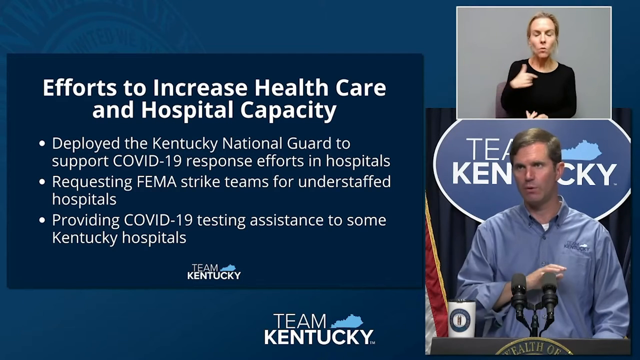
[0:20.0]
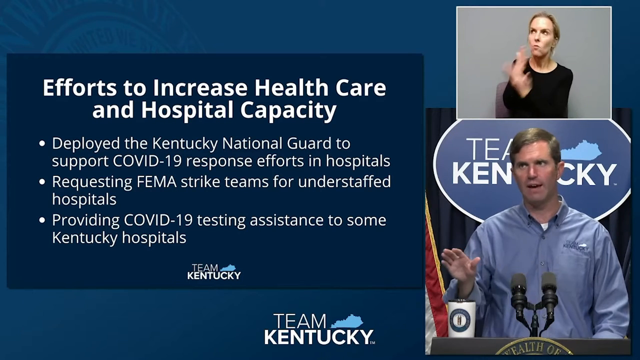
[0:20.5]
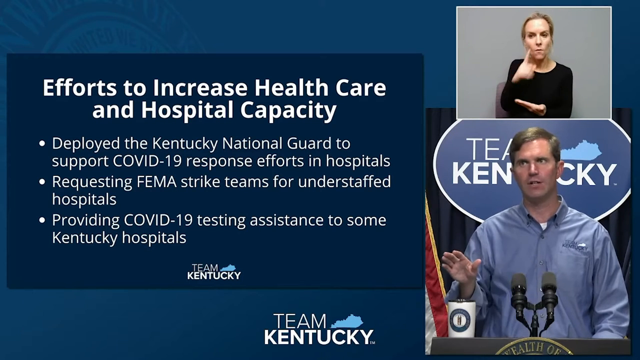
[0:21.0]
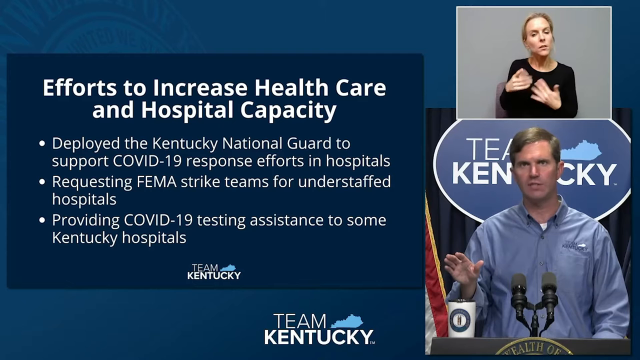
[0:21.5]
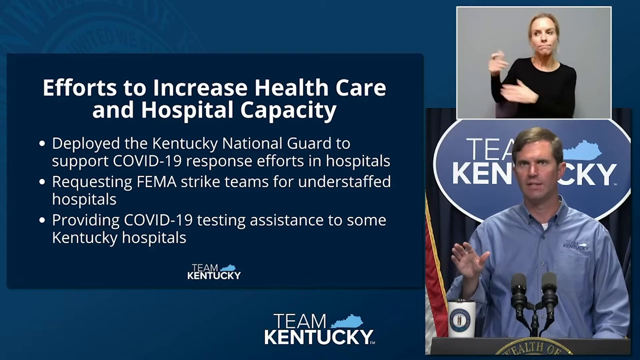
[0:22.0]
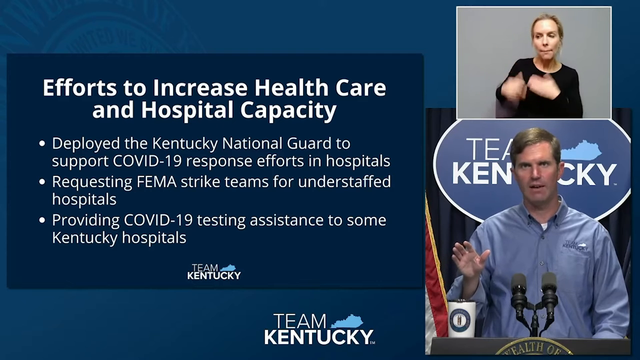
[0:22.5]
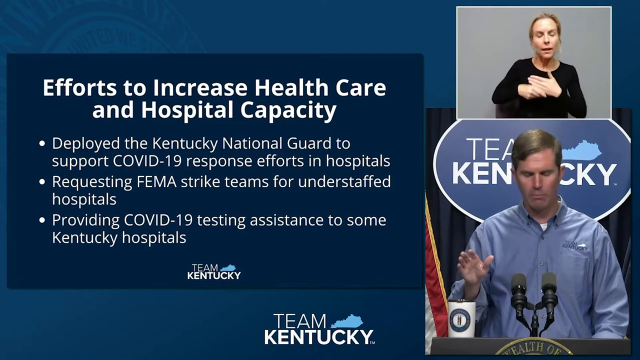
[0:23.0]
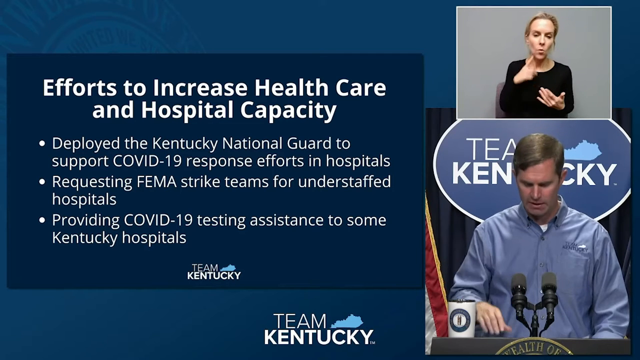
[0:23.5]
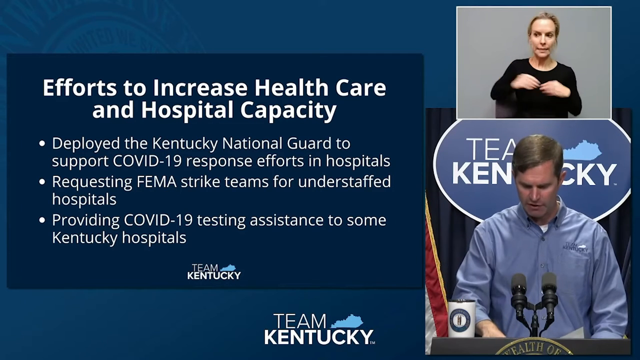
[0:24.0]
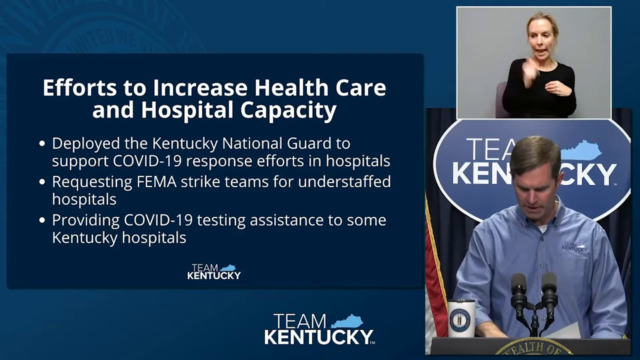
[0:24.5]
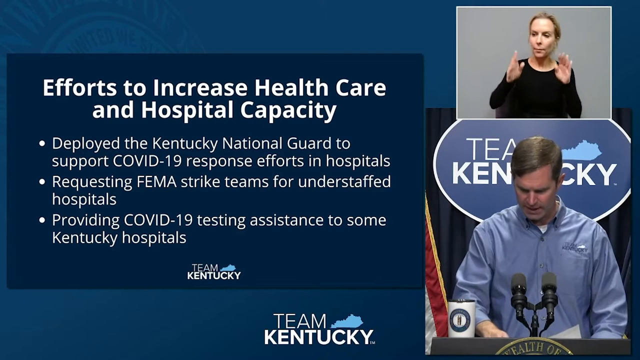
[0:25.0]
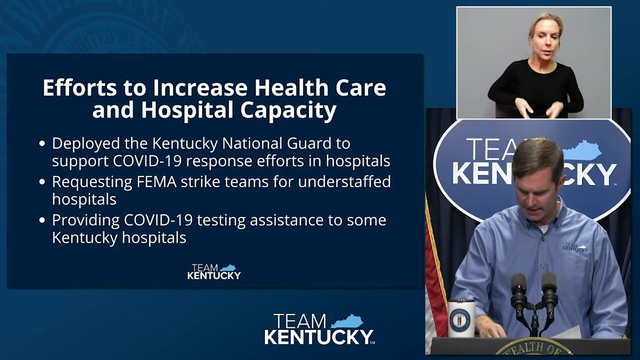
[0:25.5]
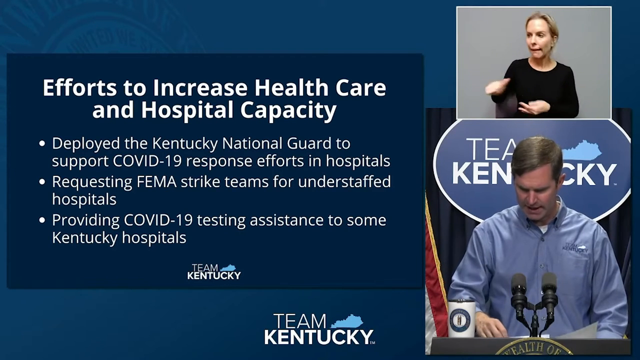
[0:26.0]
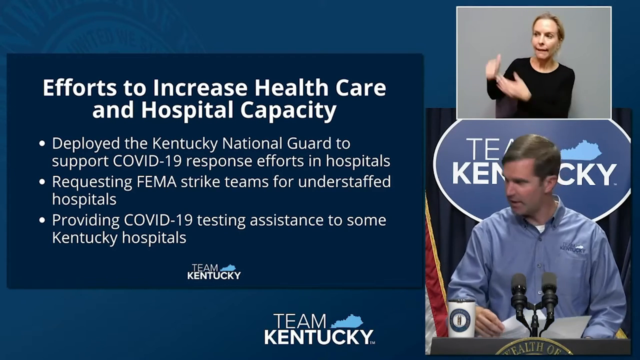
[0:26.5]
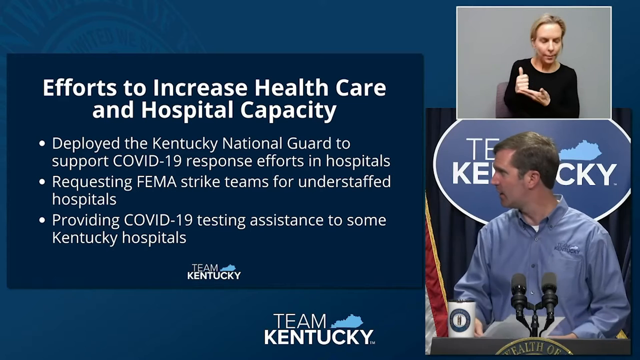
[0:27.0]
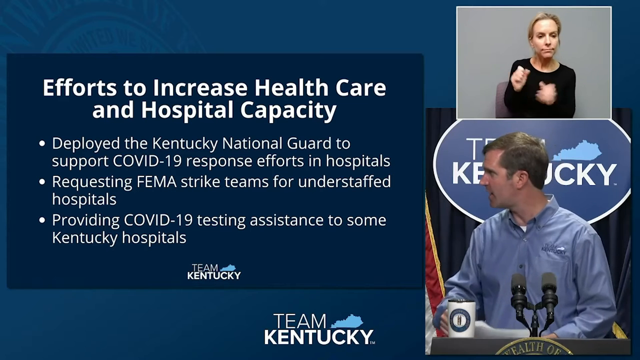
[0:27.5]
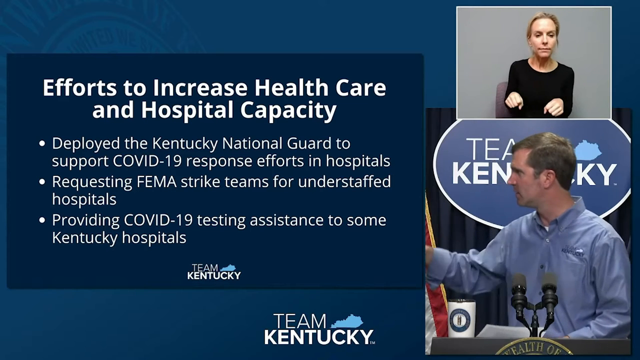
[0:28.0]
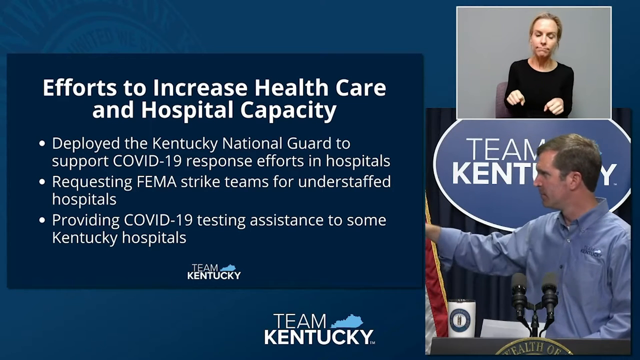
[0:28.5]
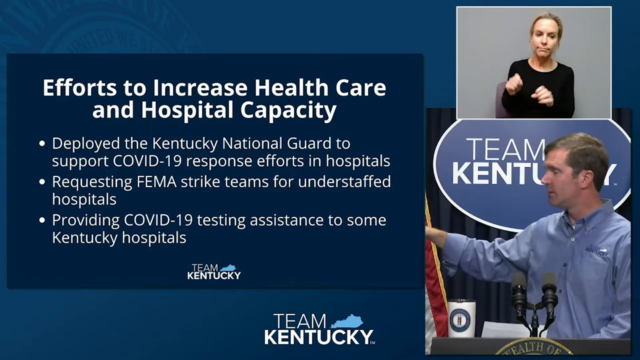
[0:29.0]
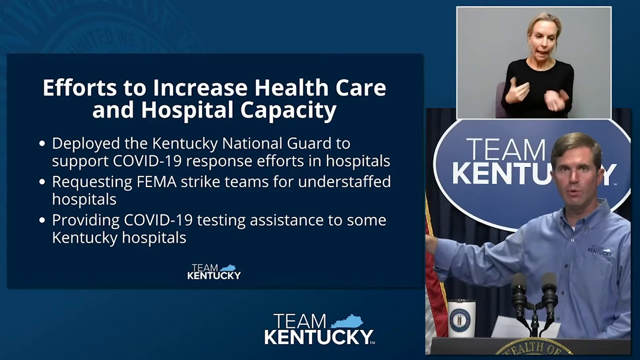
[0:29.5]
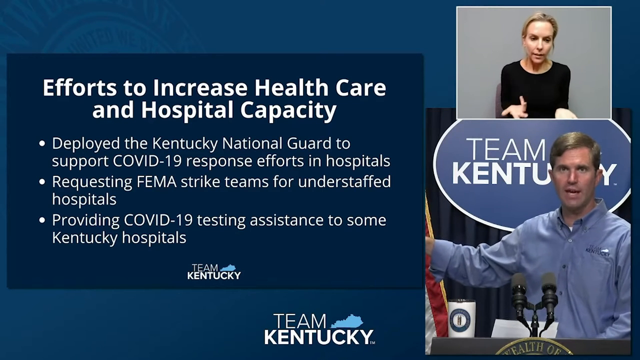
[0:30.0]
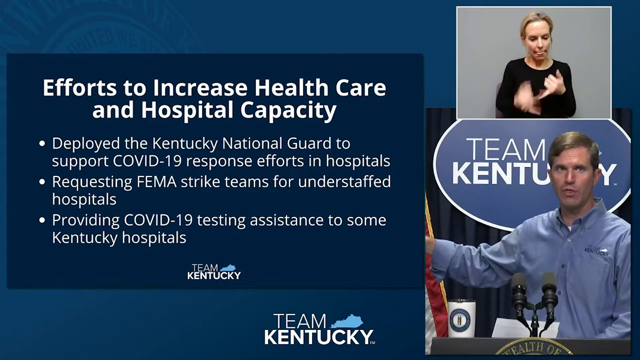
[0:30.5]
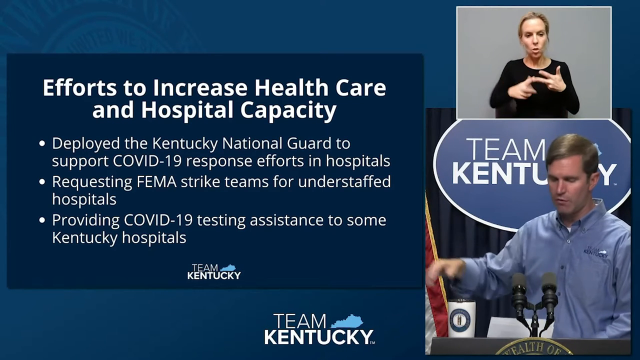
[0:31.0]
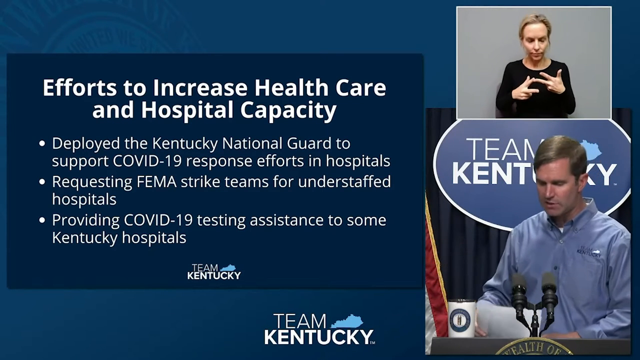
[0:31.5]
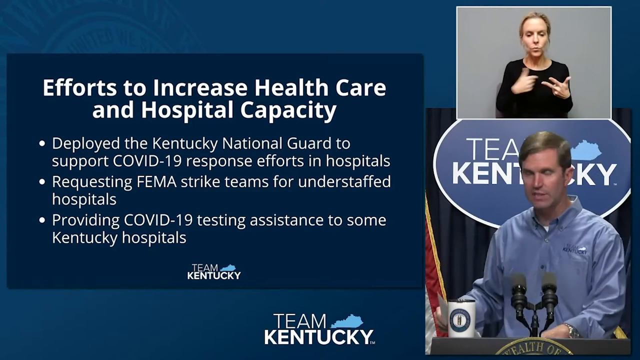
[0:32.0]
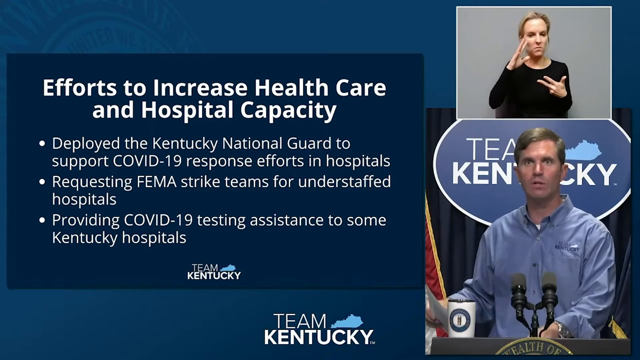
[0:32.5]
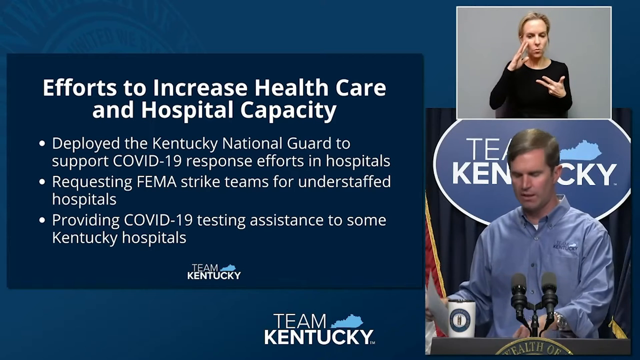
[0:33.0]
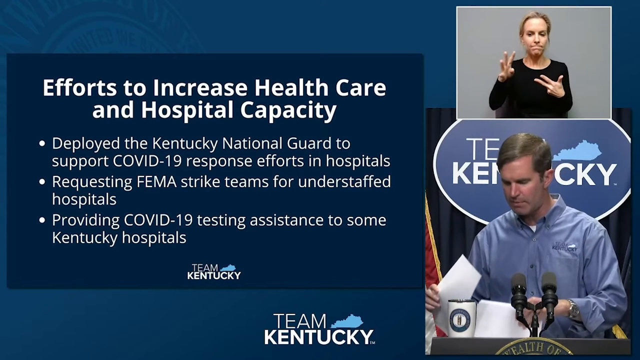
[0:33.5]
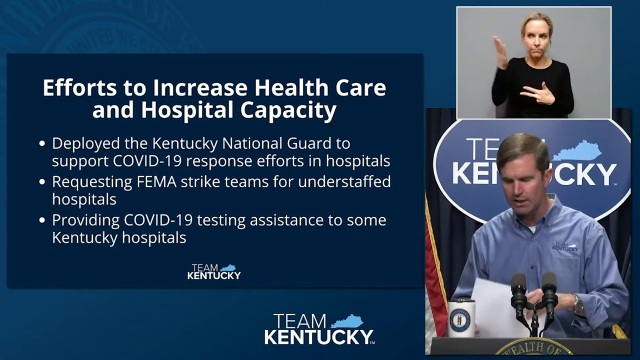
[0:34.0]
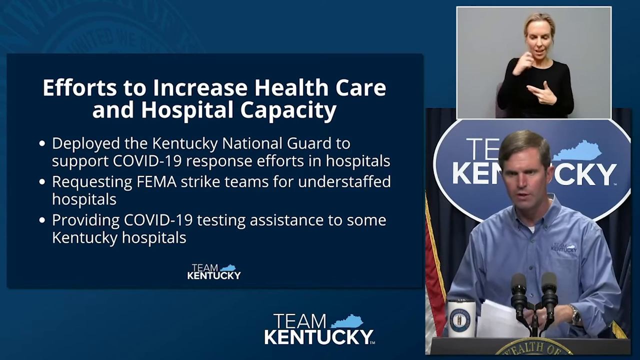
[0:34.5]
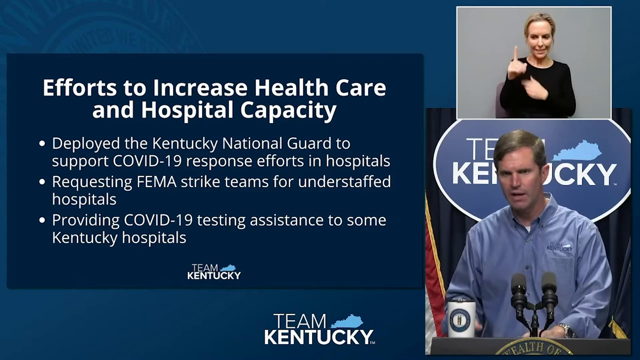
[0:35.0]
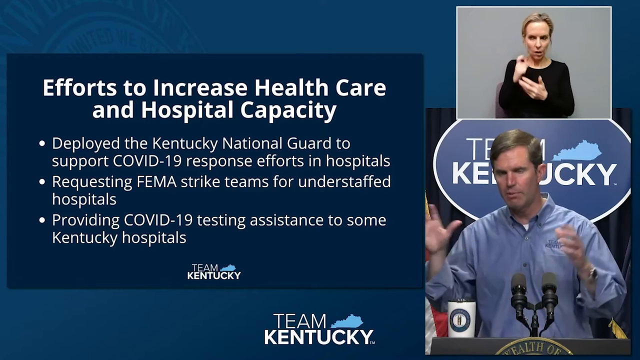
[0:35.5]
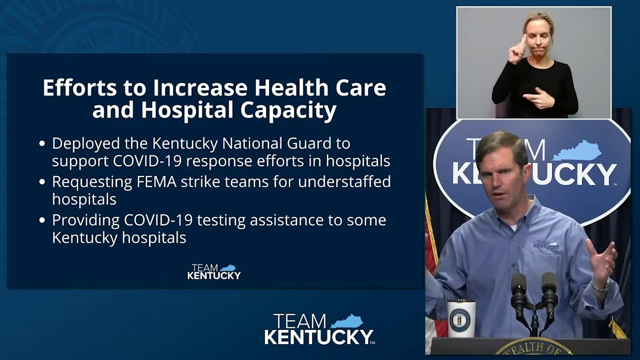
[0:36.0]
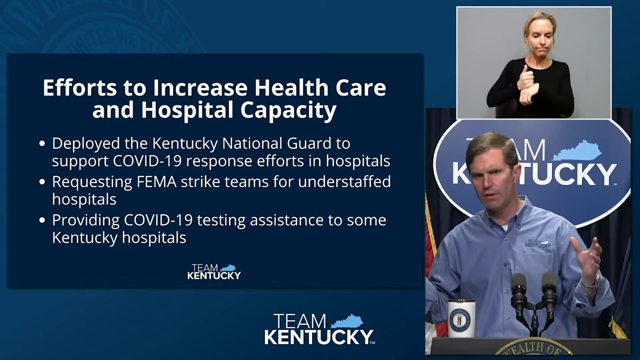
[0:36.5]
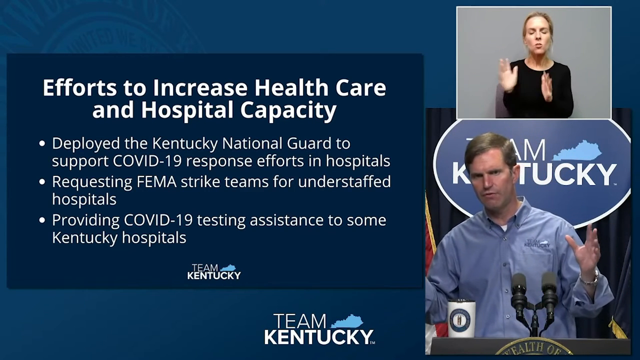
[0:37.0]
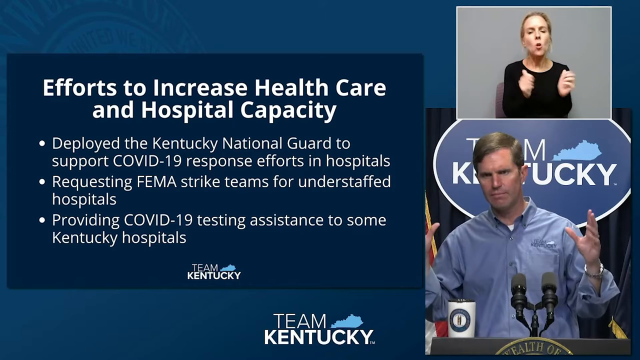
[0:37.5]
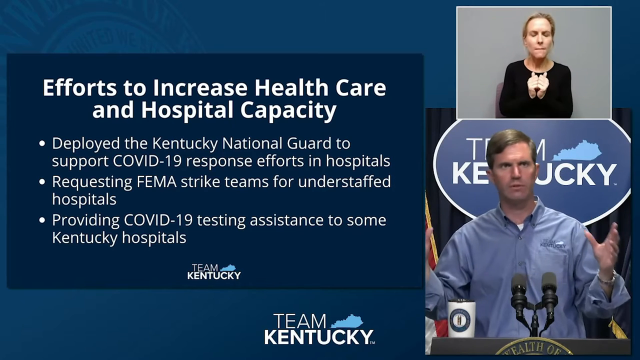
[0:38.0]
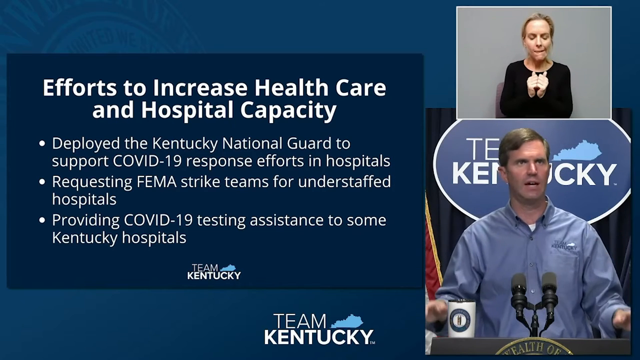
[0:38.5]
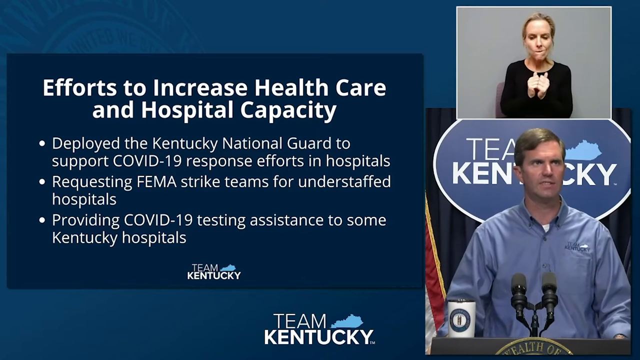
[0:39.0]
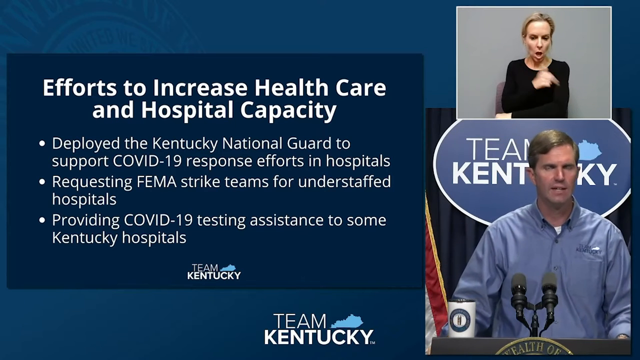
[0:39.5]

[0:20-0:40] A TV announcement about Team Kentucky's COVID-19 plans opens with efforts to increase health care and hospital capacity. In the lower right-hand corner, a man who could be the governor or a spokesperson stands in front of a Team Kentucky sign with microphones in front of him, talking. In the upper right-hand corner, a woman in a black shirt, with blonde hair pulled back kind of in a ponytail, does sign language for deaf viewers. The points covered are deploying the Kentucky National Guard, requesting FEMA strike teams for understaffed hospitals, and providing COVID-19 testing assistance to some Kentucky hospitals.